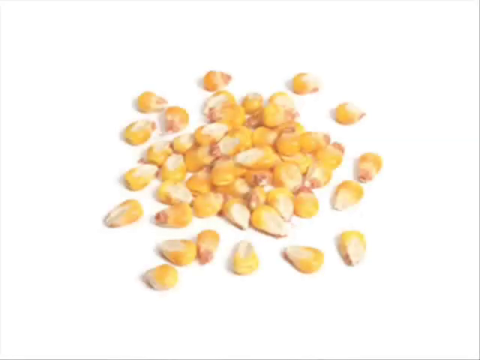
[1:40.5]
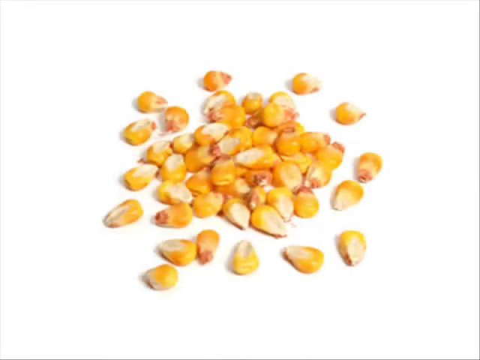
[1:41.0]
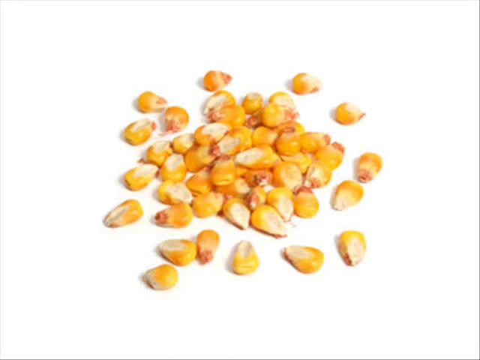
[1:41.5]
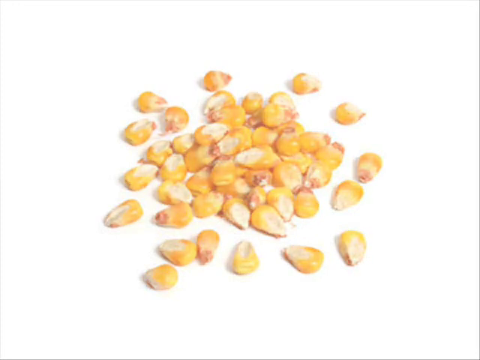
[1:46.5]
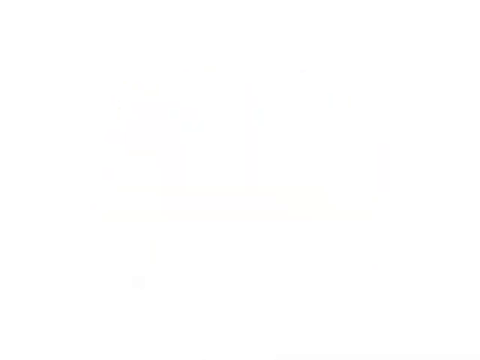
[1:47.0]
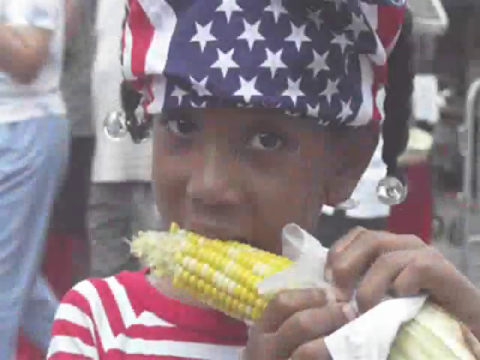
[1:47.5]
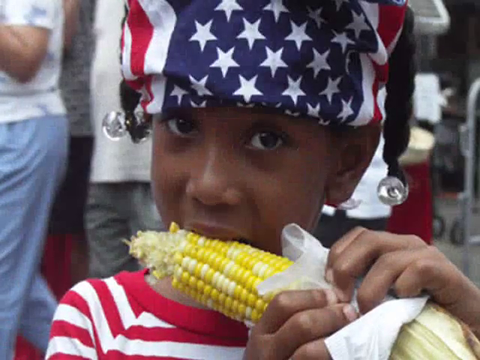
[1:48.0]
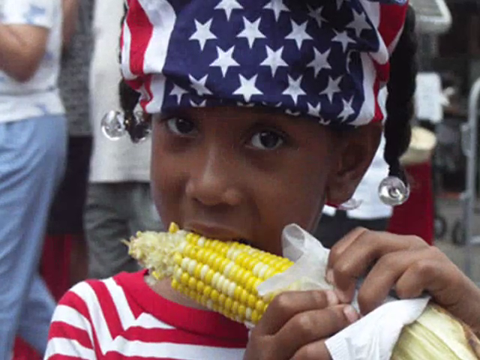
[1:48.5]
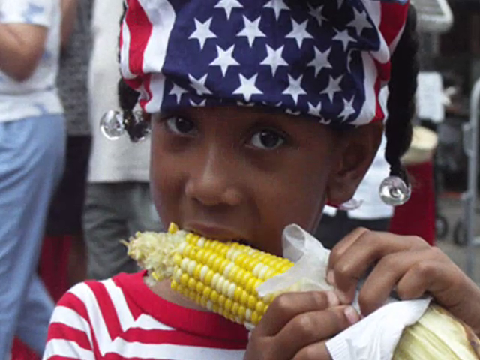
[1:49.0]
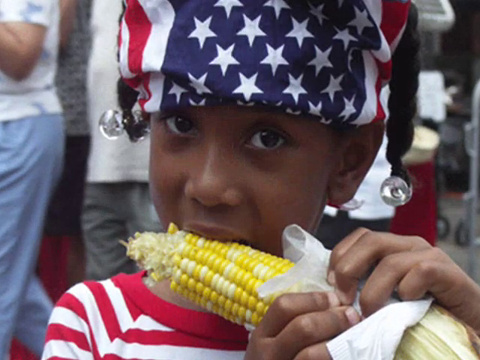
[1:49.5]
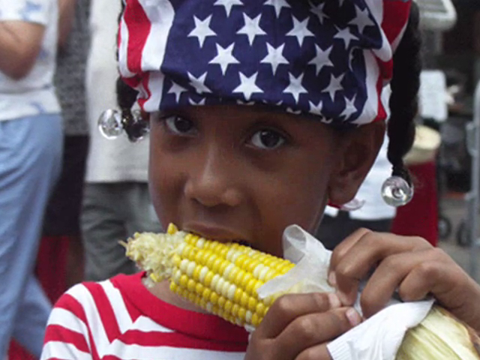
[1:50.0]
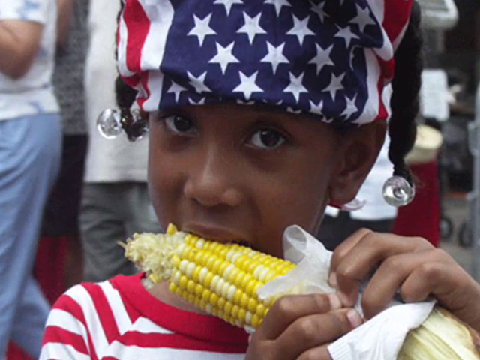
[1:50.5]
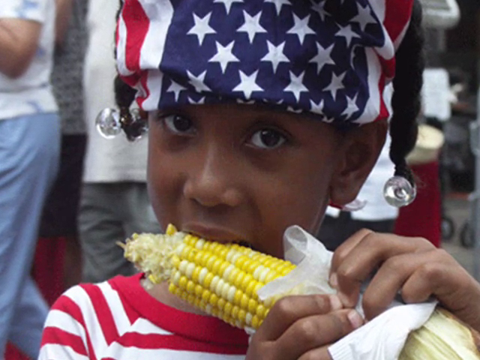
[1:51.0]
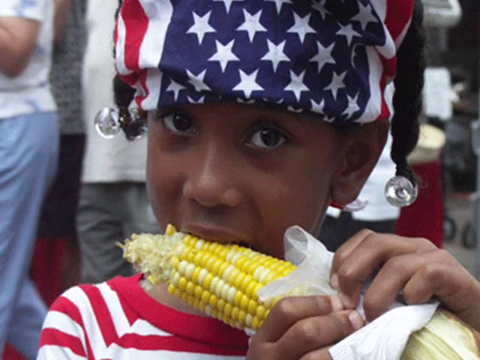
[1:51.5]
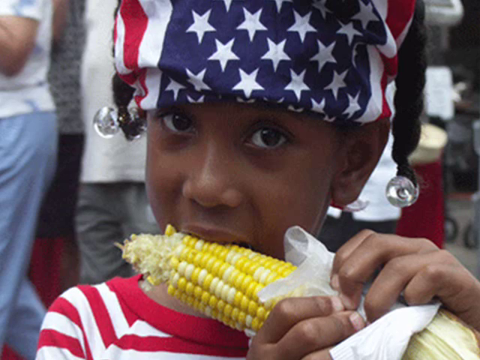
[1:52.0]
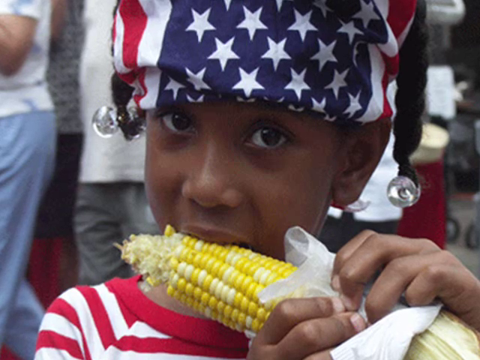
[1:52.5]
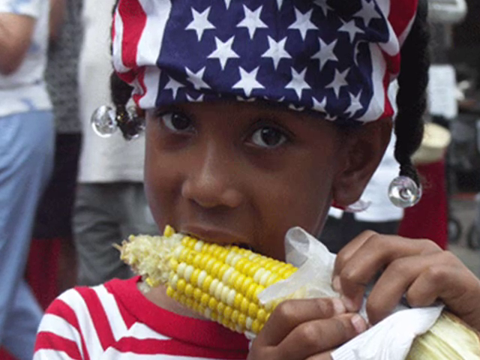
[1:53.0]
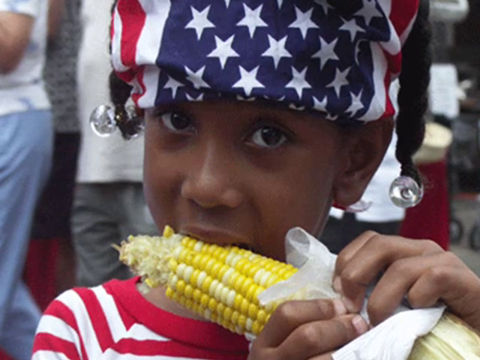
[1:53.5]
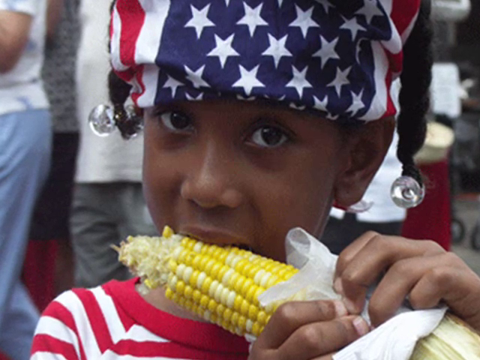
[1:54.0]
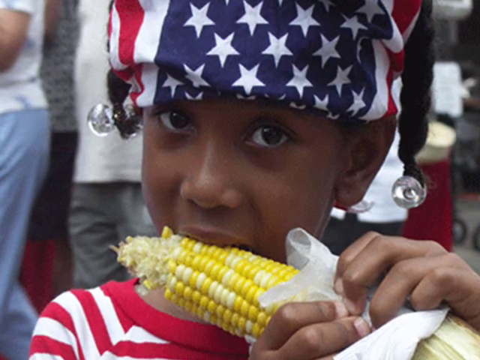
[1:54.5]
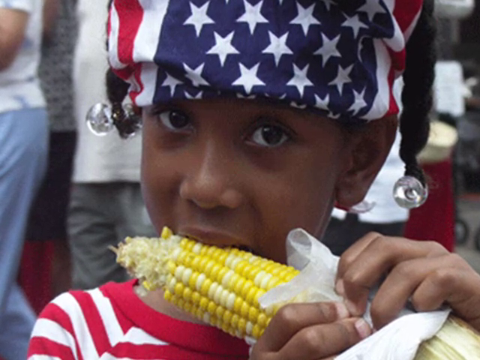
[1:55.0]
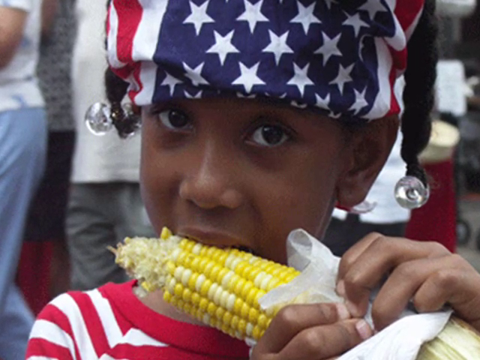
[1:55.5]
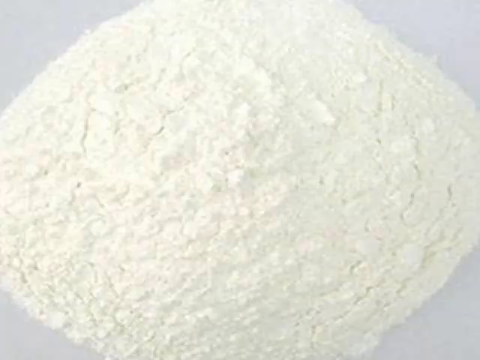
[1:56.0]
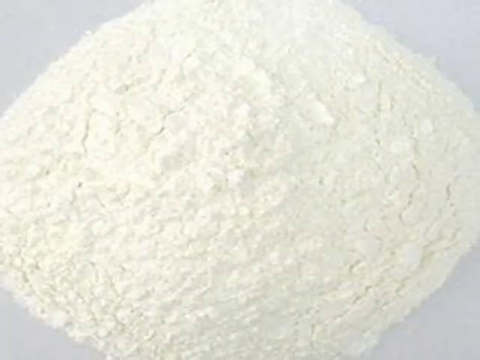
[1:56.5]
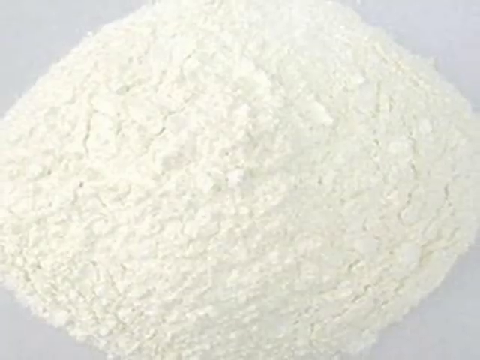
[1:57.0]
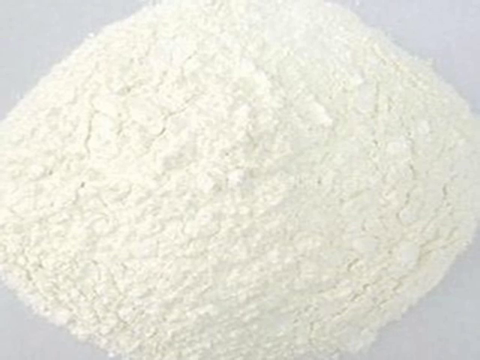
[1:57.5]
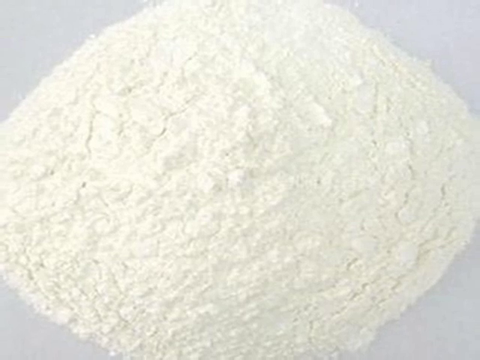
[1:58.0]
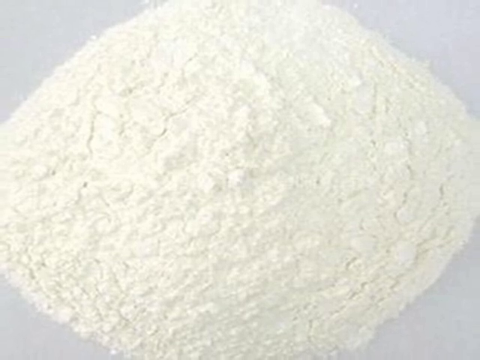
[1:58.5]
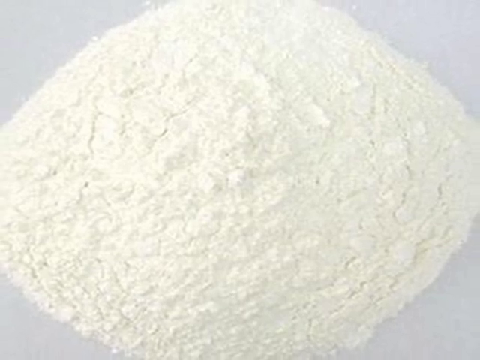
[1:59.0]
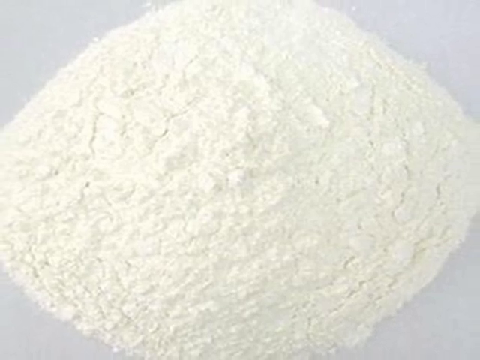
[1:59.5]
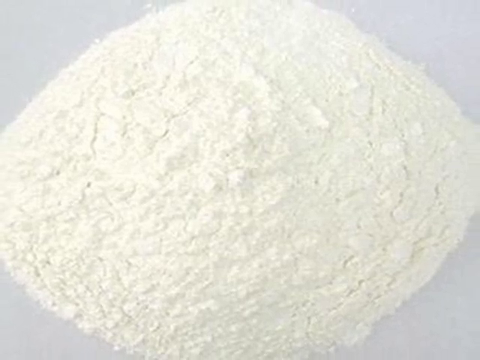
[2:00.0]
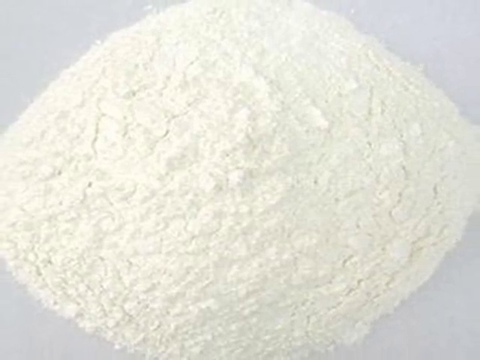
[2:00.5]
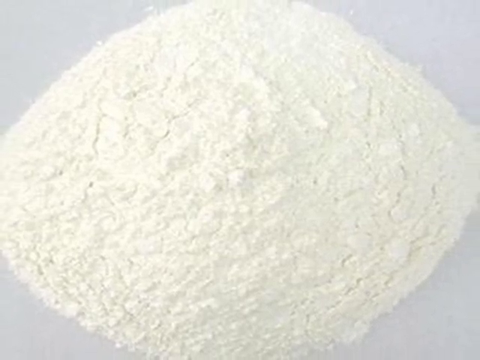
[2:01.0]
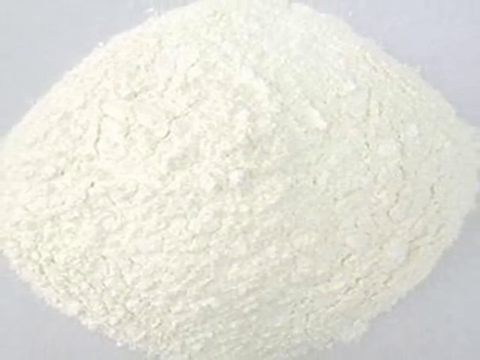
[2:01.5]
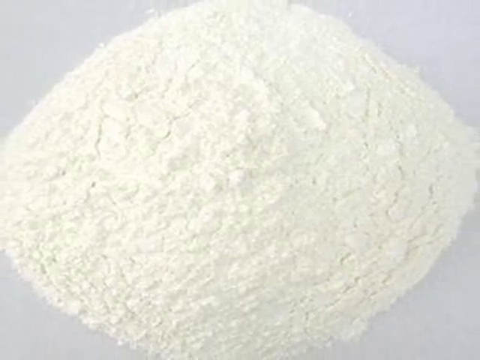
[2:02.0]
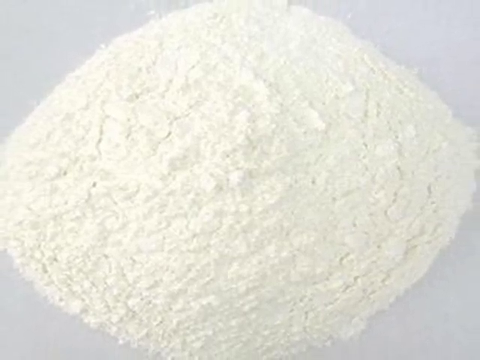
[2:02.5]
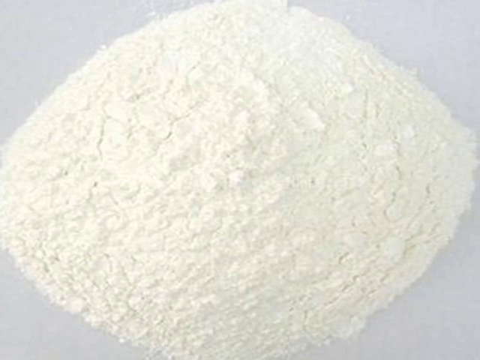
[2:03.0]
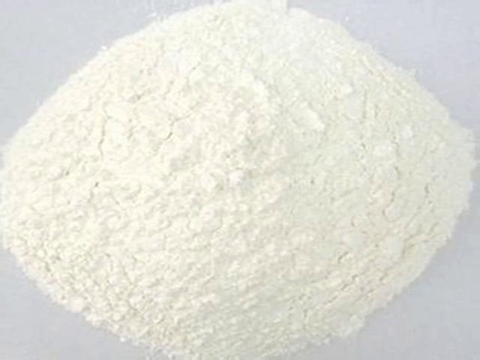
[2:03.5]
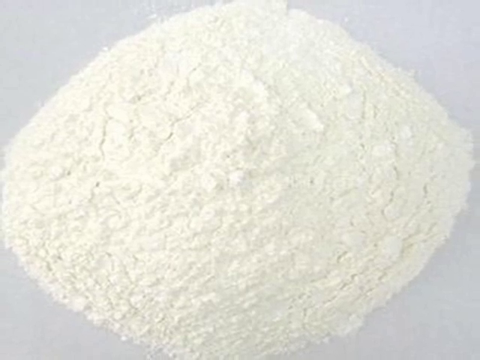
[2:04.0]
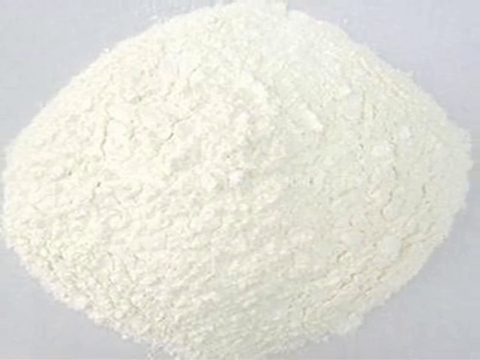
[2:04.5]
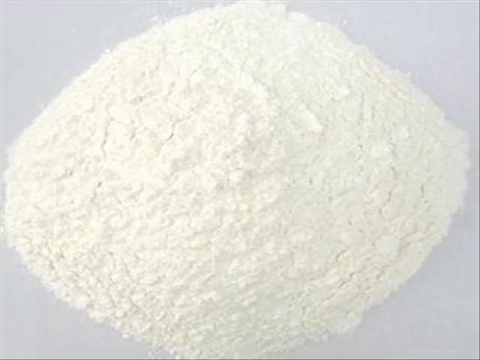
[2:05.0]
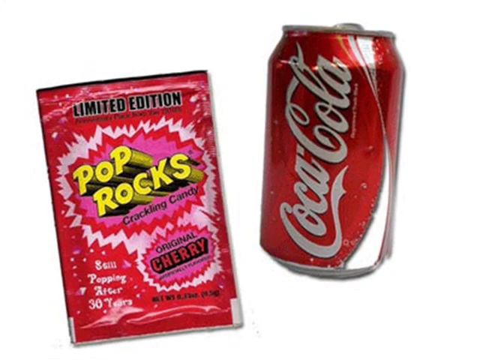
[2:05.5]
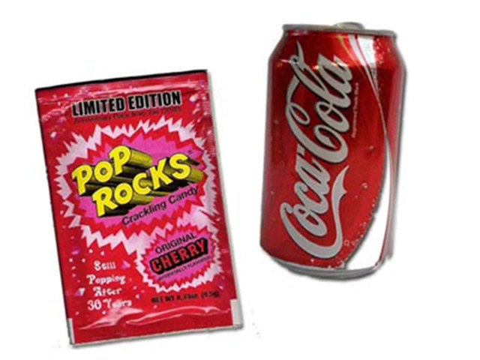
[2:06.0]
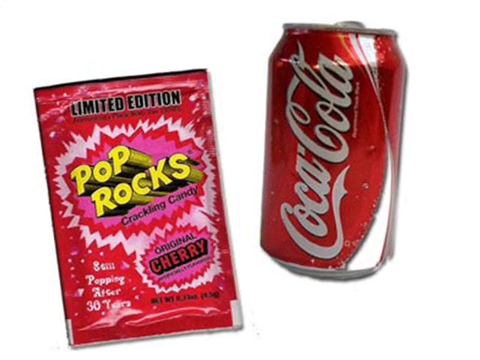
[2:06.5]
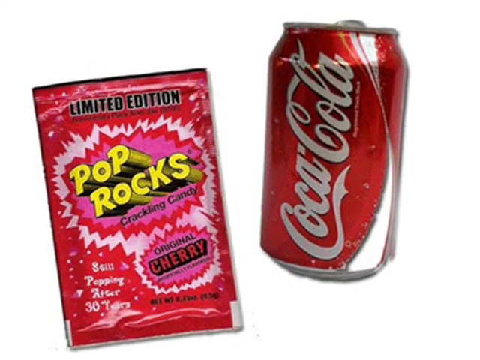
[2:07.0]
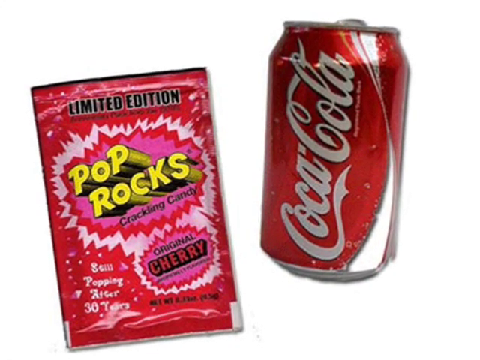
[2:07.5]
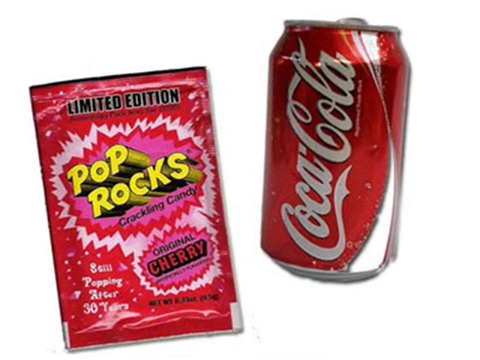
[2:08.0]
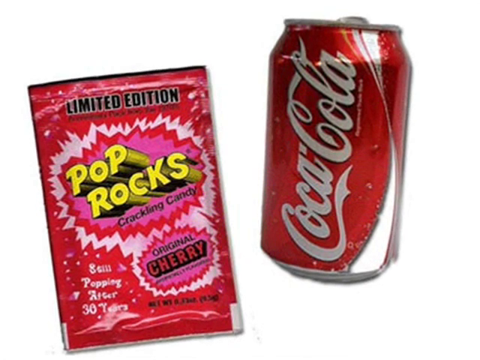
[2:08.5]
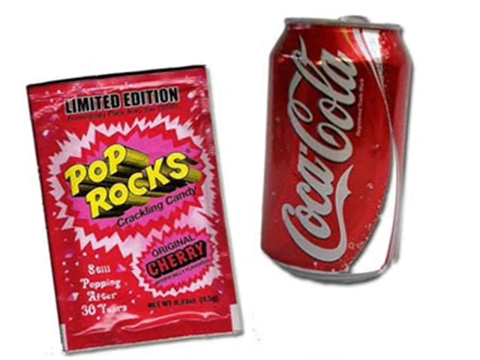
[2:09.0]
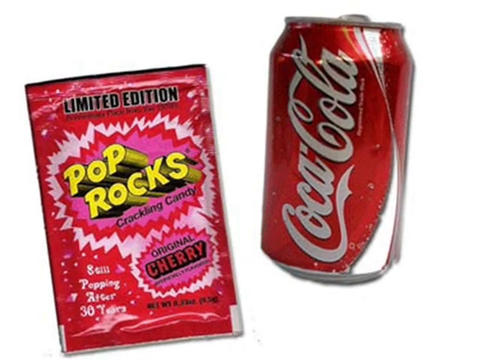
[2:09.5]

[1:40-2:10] Shucked corn kernels are stacked in a pile on a white surface, pointing in different directions. The scene transitions to a person wearing a United States flag hat and red, white, and blue clothes, which looks like it could be the Fourth of July. The person, who looks like a young girl, is African American, has ponytails, and is eating corn on the cob. Next, against a white background, is what appears to be a pizza crust, possibly uncooked dough. Then a Coca-Cola can and limited edition cherry Pop Rocks candy are shown.